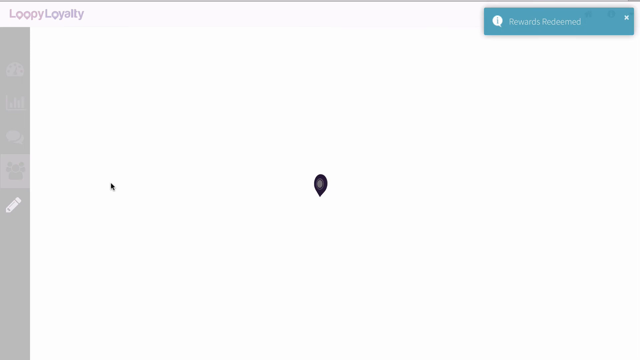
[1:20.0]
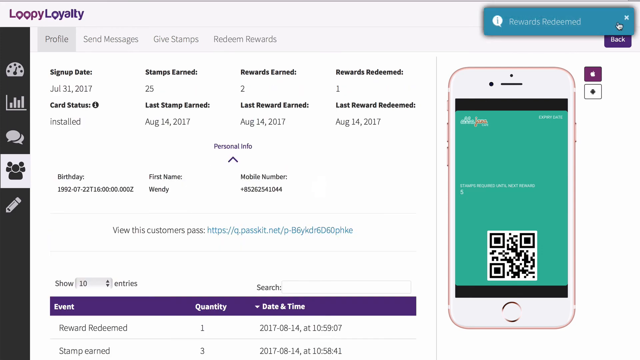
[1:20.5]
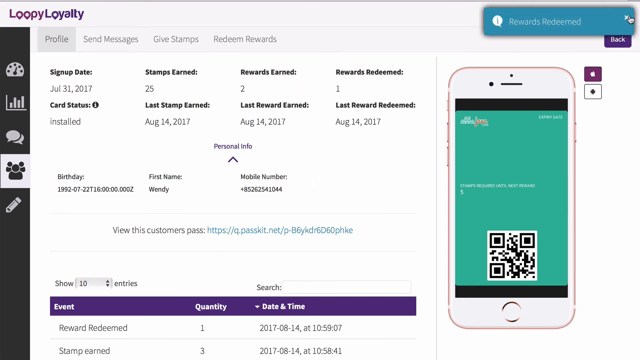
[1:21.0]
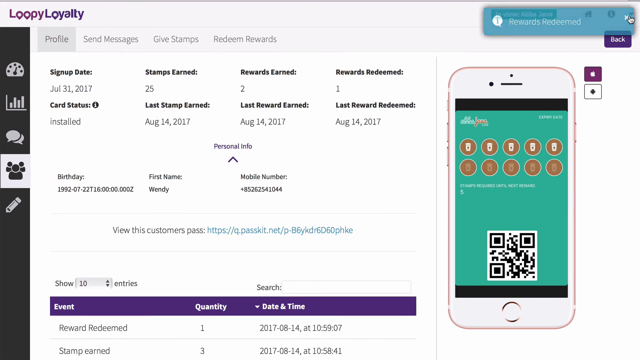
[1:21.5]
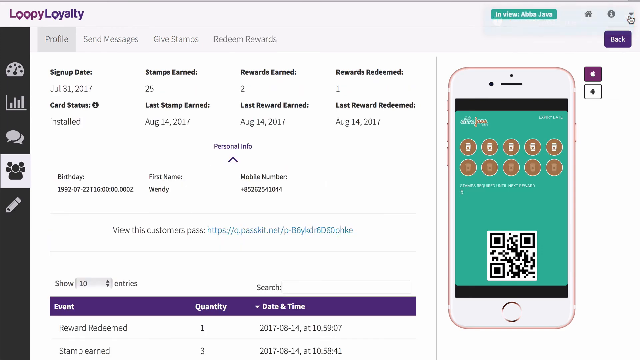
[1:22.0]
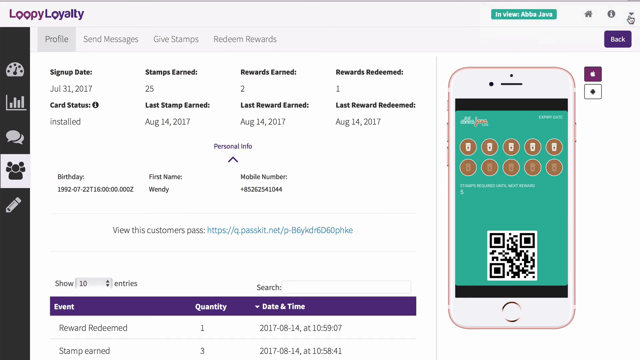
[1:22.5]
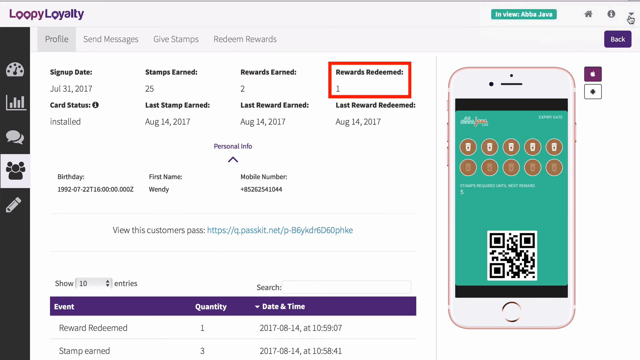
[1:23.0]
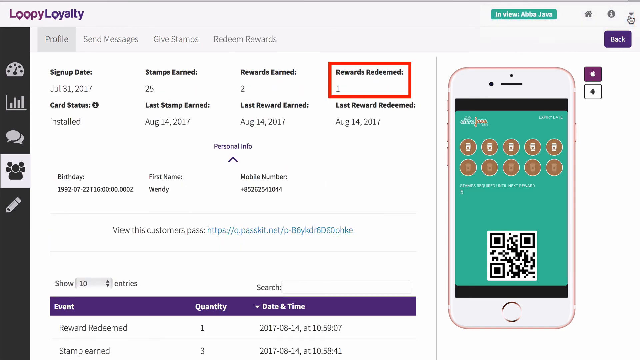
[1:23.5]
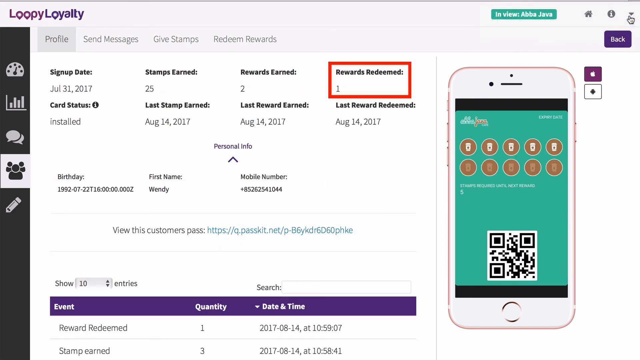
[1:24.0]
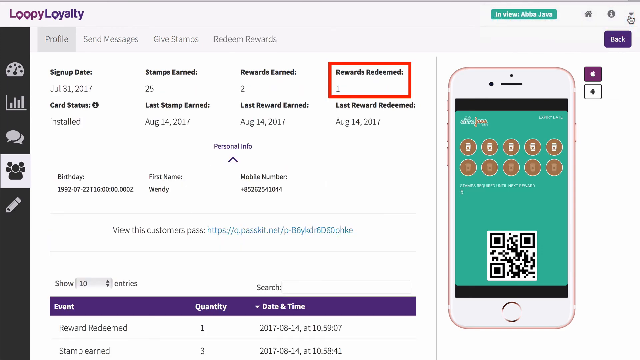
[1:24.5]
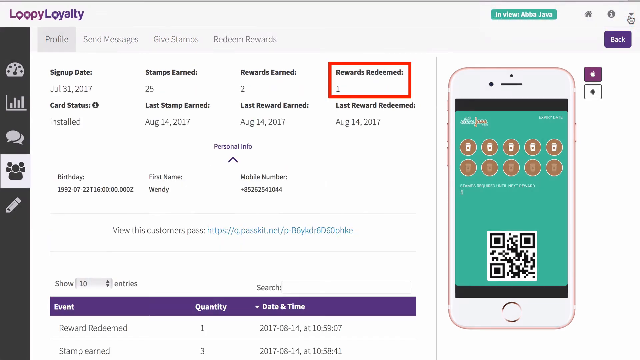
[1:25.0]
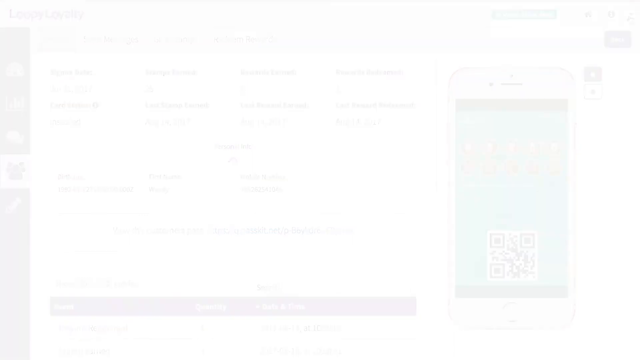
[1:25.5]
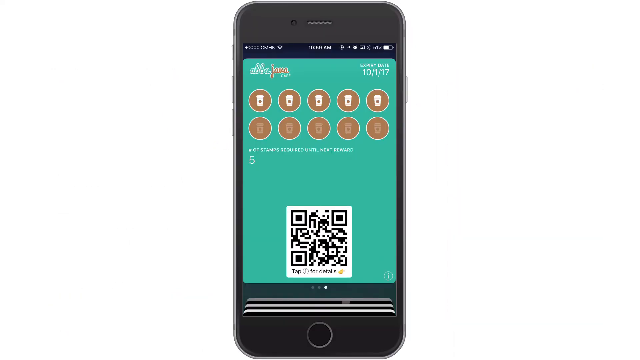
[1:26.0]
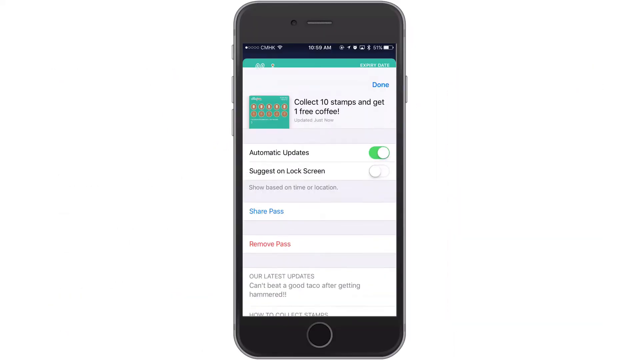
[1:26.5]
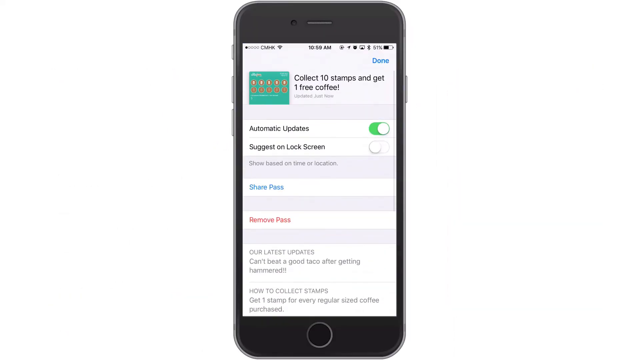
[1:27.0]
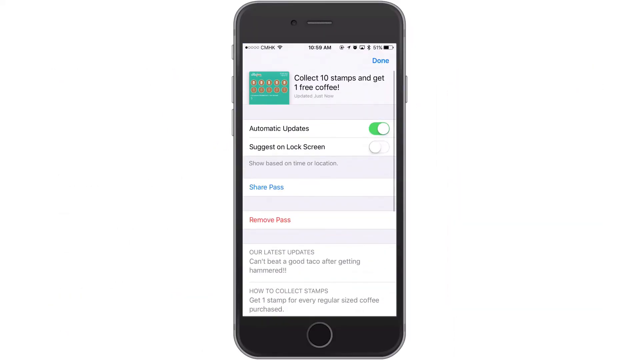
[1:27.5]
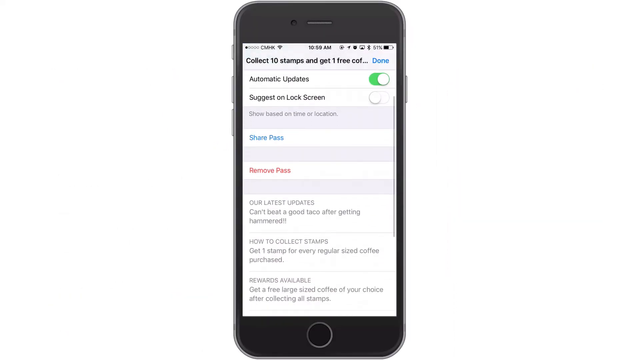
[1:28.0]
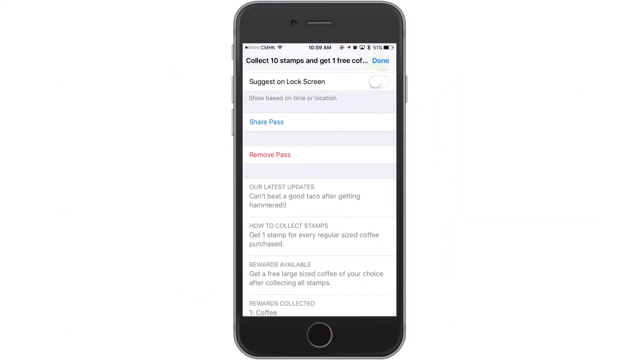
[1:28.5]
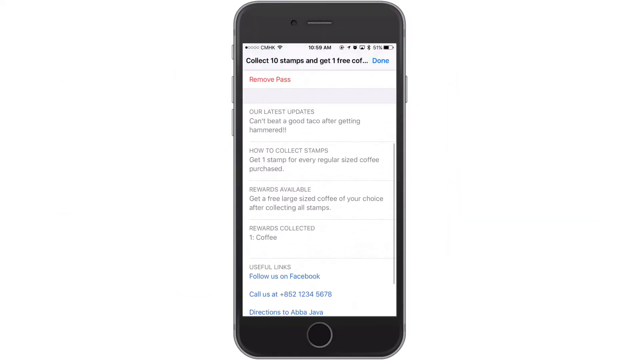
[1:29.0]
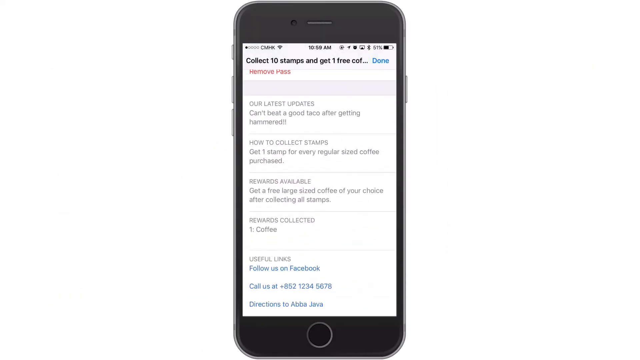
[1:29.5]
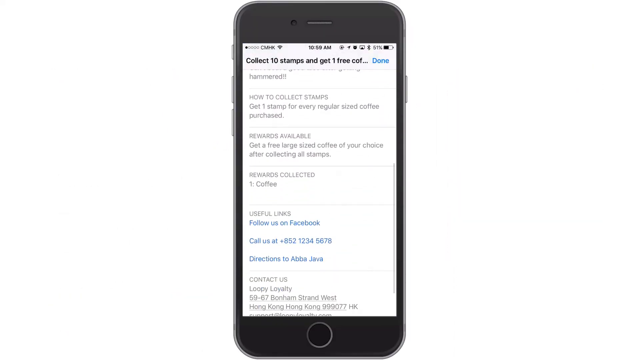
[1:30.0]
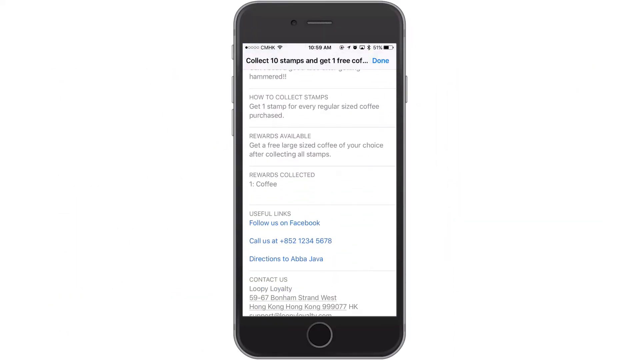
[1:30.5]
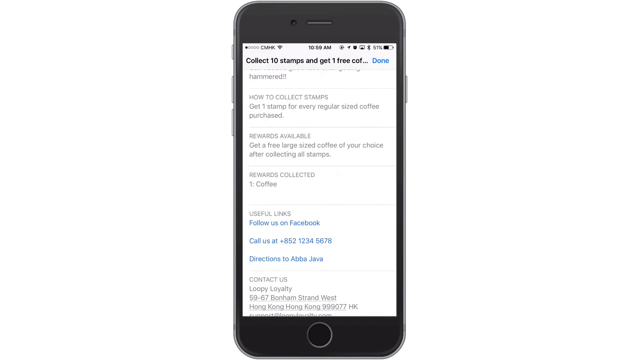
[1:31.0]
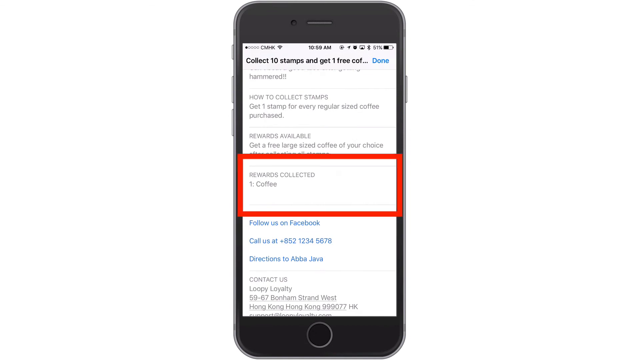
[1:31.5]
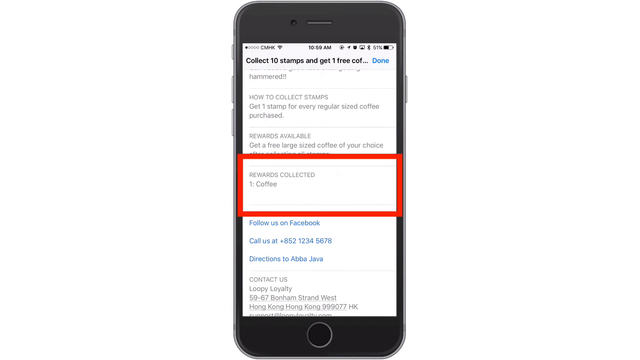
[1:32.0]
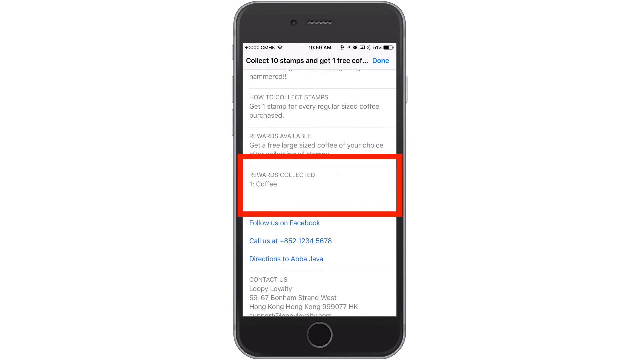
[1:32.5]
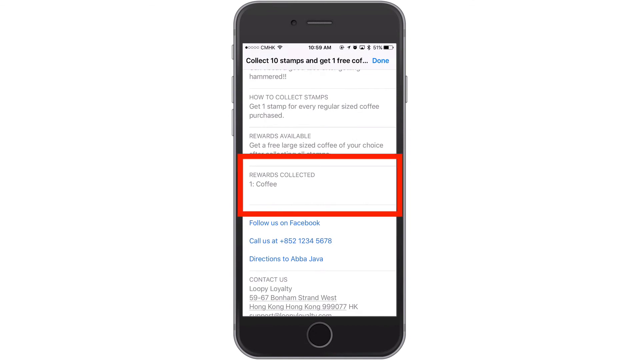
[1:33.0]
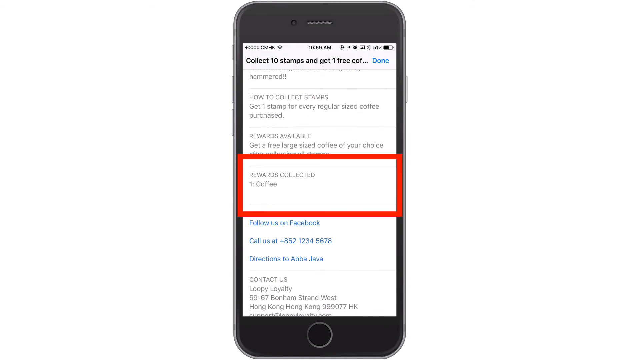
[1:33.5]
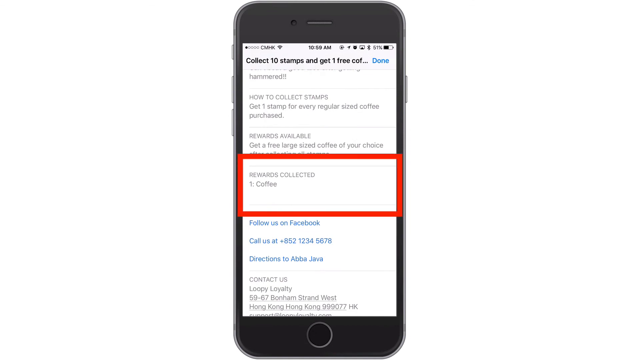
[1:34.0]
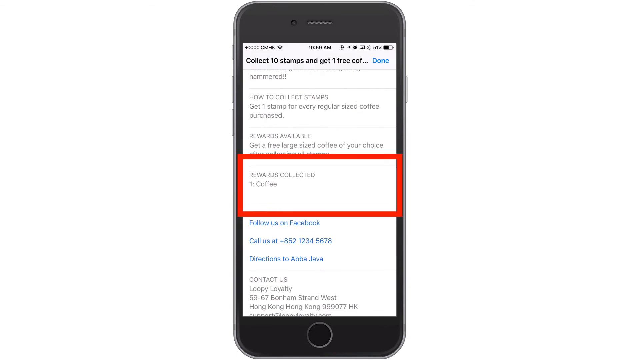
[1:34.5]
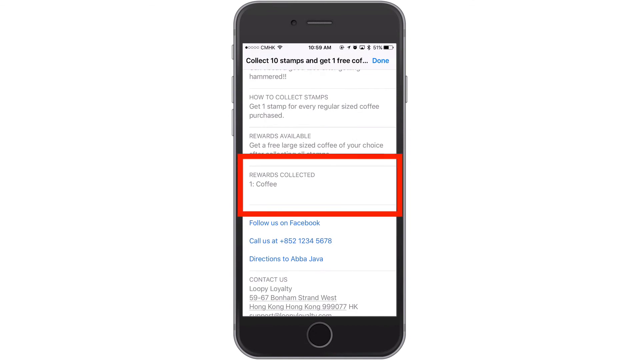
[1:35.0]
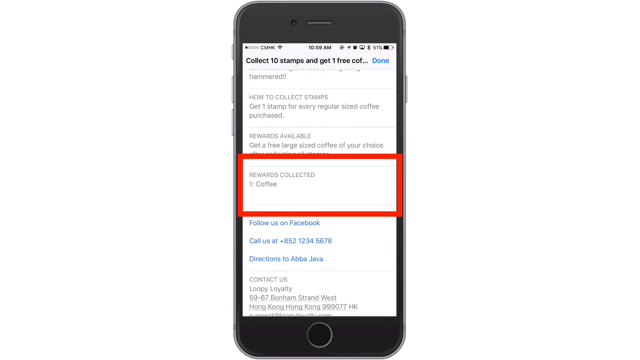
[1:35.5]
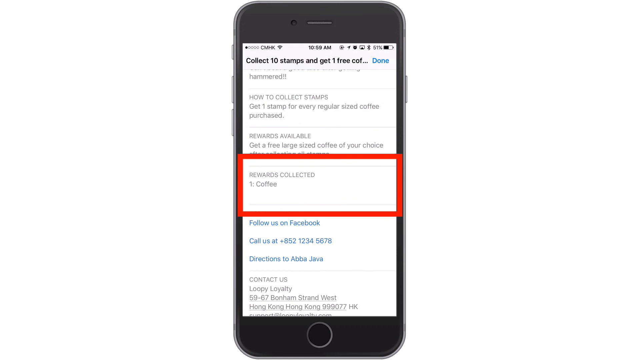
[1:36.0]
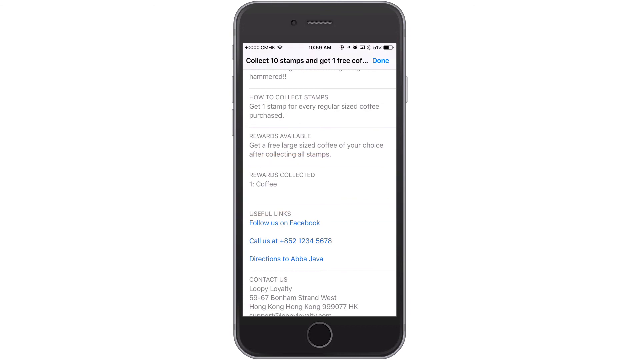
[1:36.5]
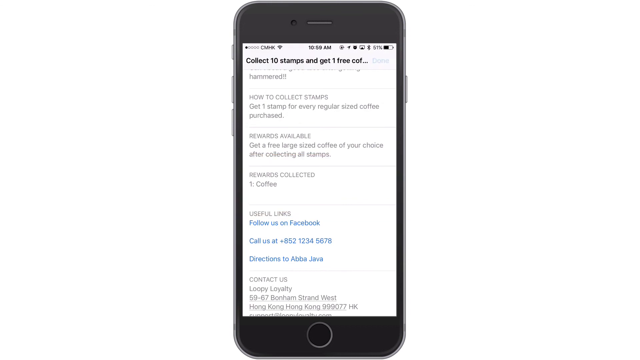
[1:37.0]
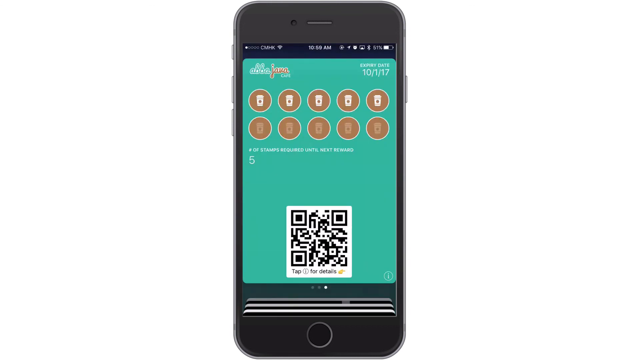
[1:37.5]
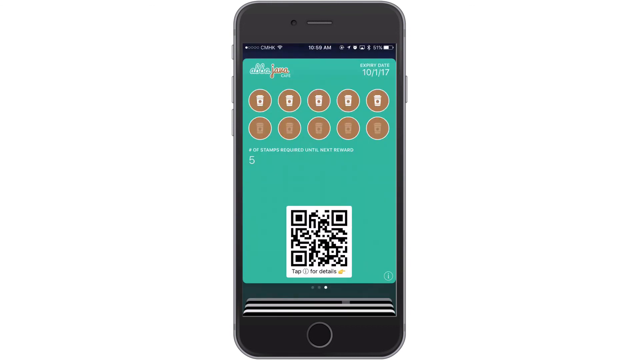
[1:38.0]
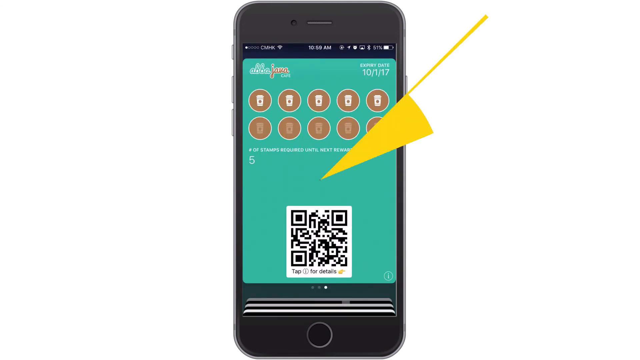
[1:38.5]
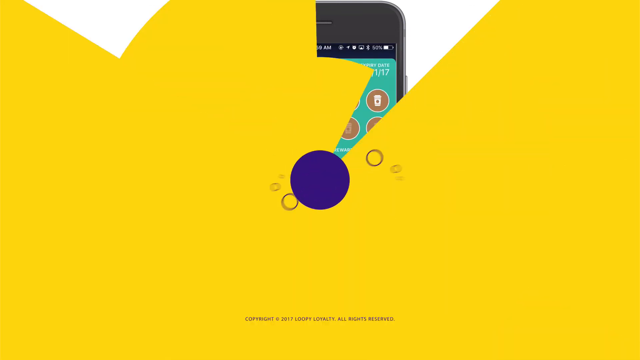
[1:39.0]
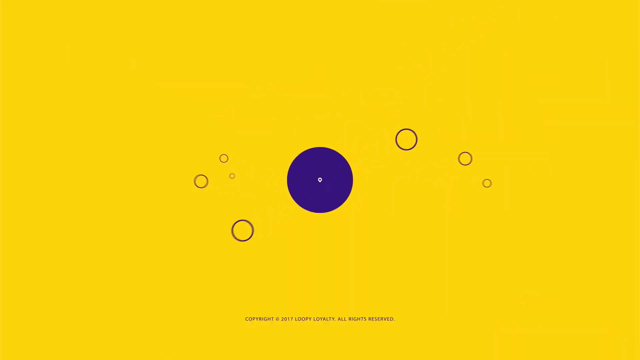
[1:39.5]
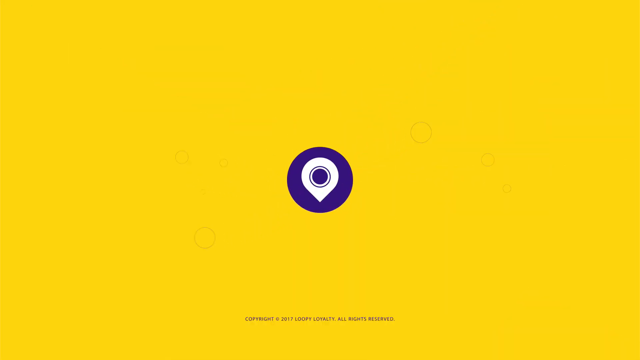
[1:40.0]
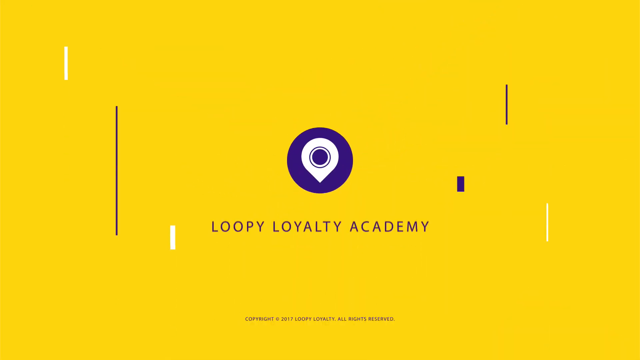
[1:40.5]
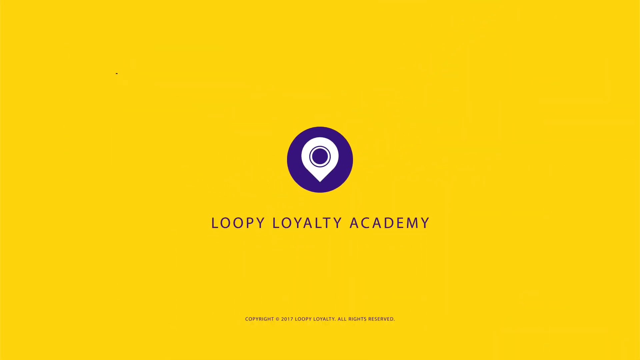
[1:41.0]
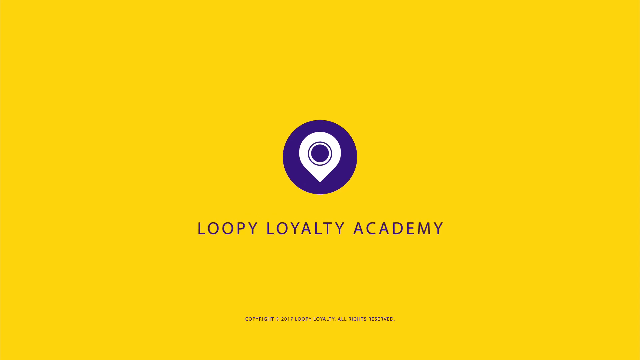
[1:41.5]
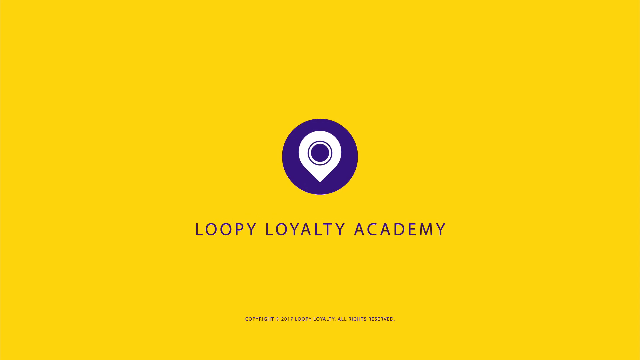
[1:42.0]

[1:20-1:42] A profile page on the Loopy Loyalty Rewards app is shown. The Loopy Loyalty logo is on purple in the top left-hand corner, and the rest of the page is in different shades of grey, black and white. It shows the user's profile information, and on the right-hand side is an outline of a mobile phone with a green screen and five rewards highlighted out of ten circles. On the main profile screen, a red rectangle now highlights rewards redeemed. This leads to the next page, a close-up of a smart screen page showing an informational page with "collect ten stamps and get one free coffee" and information about updates, lock screen, share pass and remove pass. The screen scrolls down to show rewards collected, highlighted in a red rectangular box: one coffee. The view returns to the app homepage screen, and finally returns to the brand screen, a bright yellow background with the brand logo in a blue and white circle in the middle and "Loopy Loyalty Academy" in capital letters underneath.